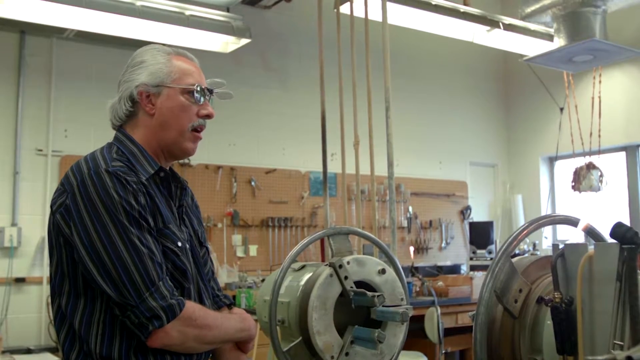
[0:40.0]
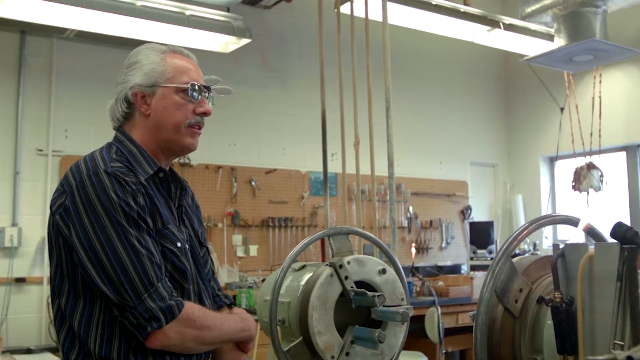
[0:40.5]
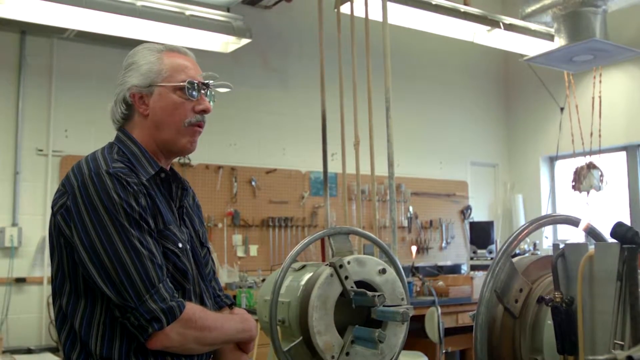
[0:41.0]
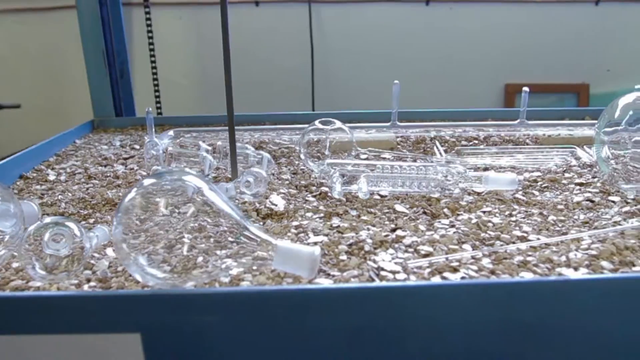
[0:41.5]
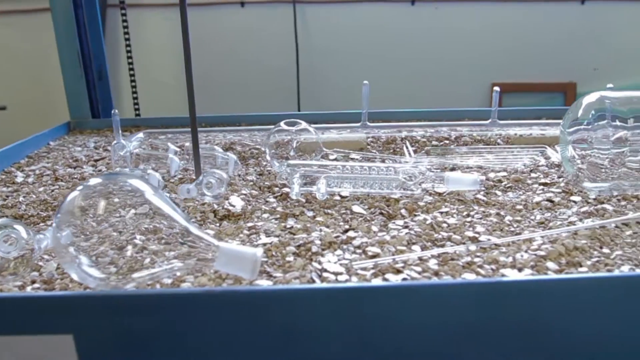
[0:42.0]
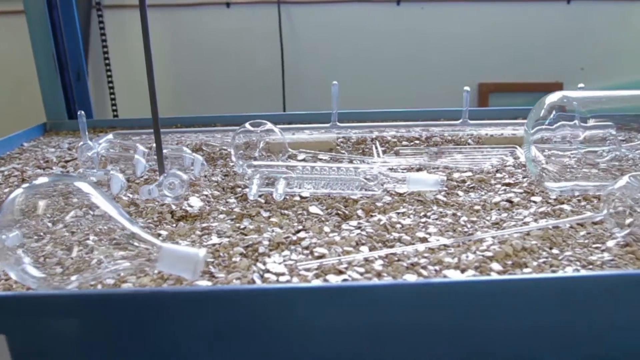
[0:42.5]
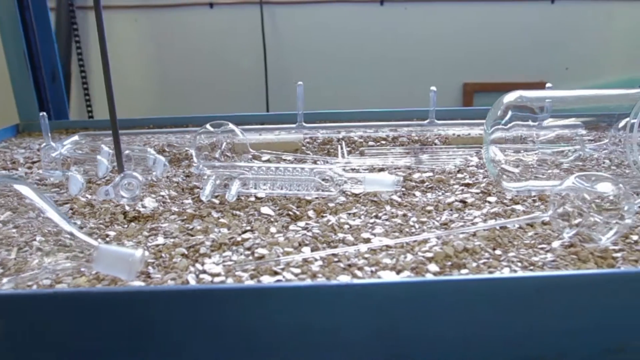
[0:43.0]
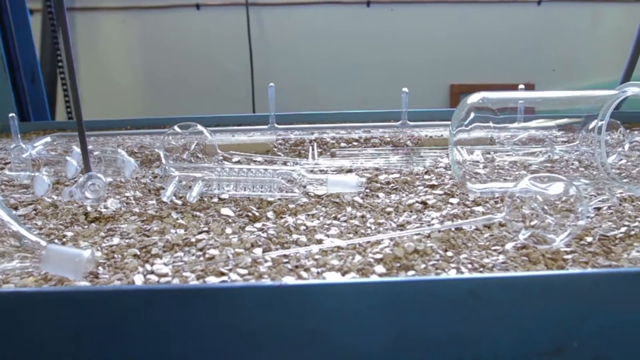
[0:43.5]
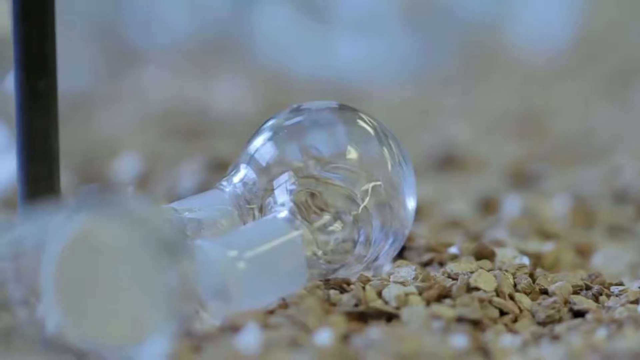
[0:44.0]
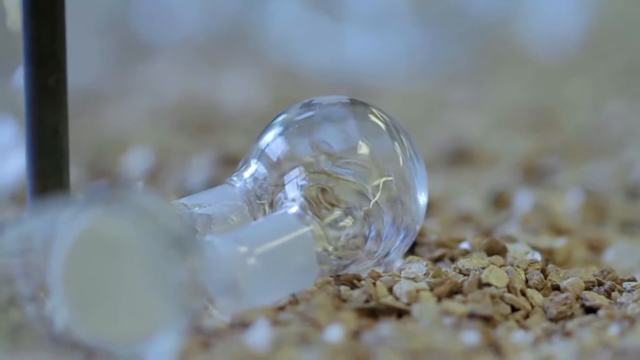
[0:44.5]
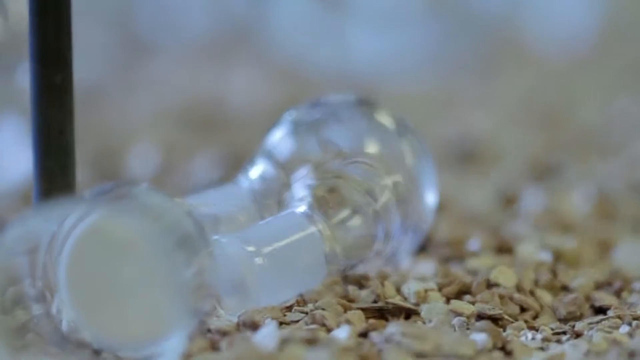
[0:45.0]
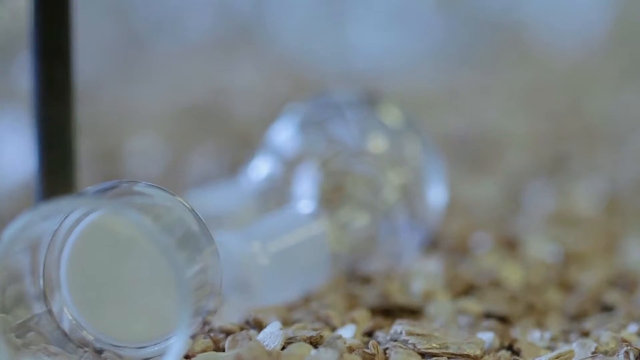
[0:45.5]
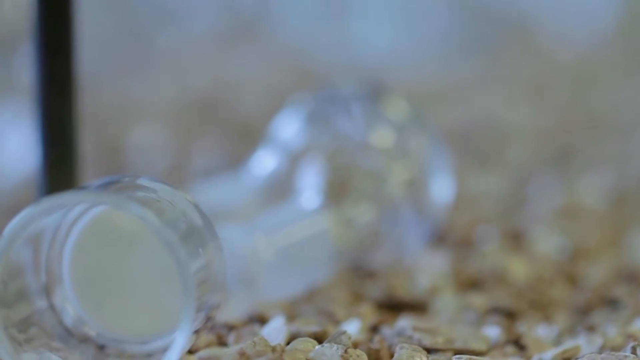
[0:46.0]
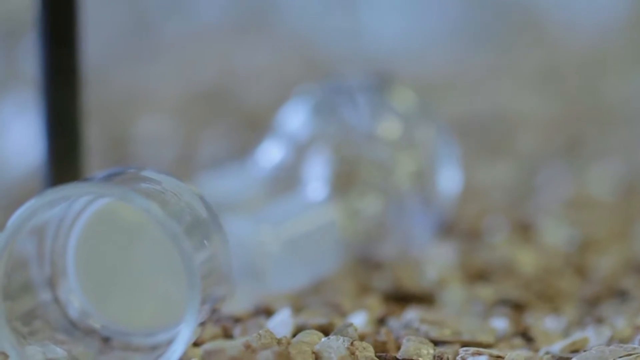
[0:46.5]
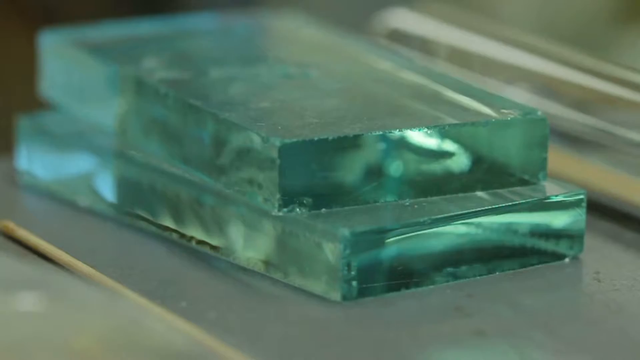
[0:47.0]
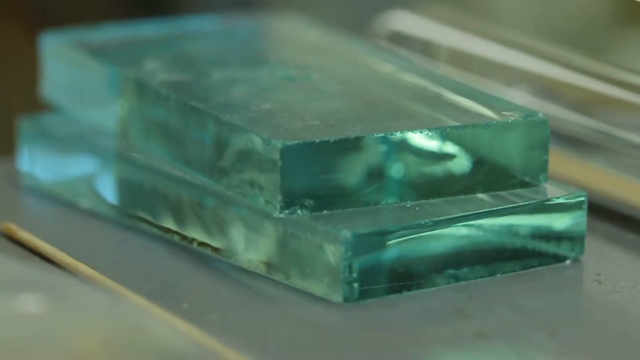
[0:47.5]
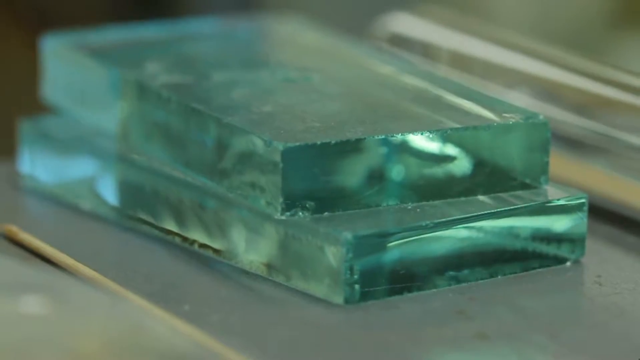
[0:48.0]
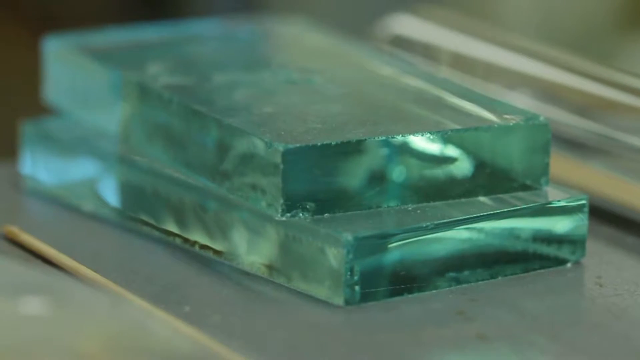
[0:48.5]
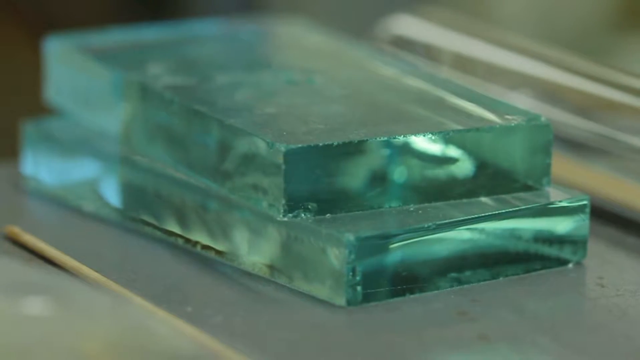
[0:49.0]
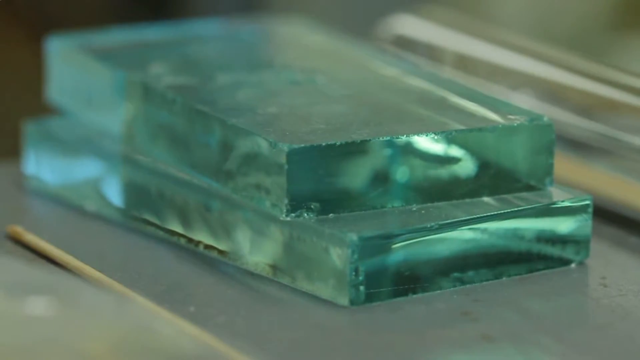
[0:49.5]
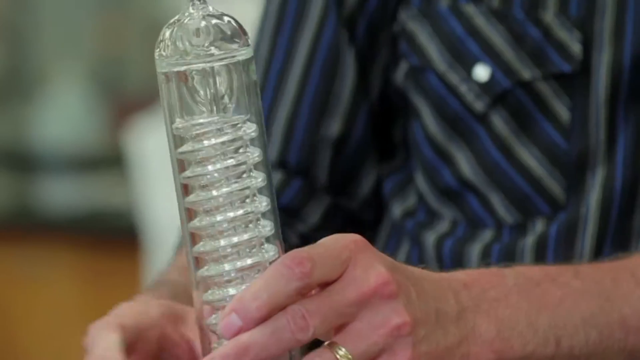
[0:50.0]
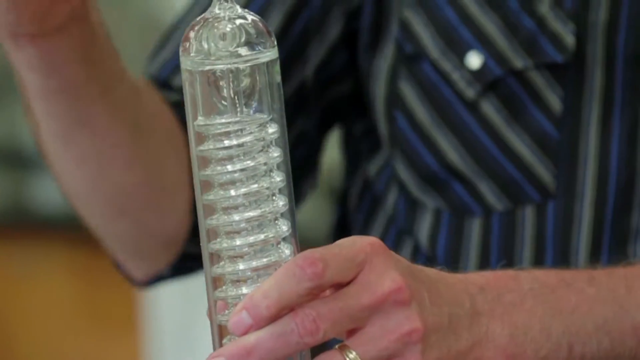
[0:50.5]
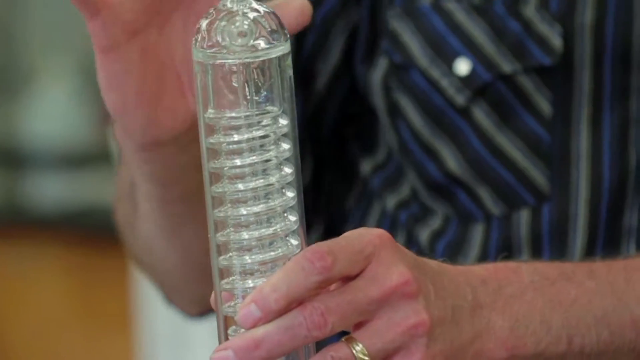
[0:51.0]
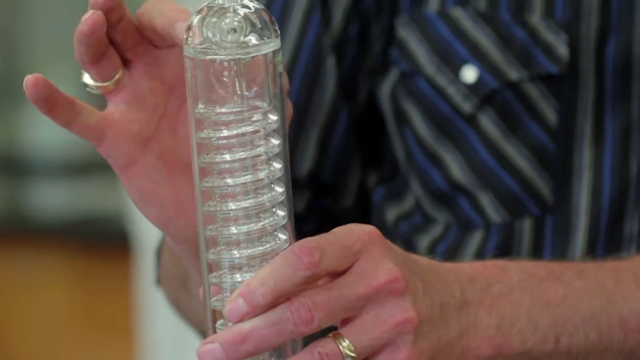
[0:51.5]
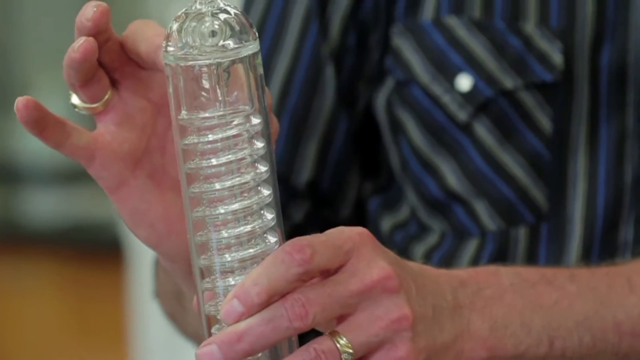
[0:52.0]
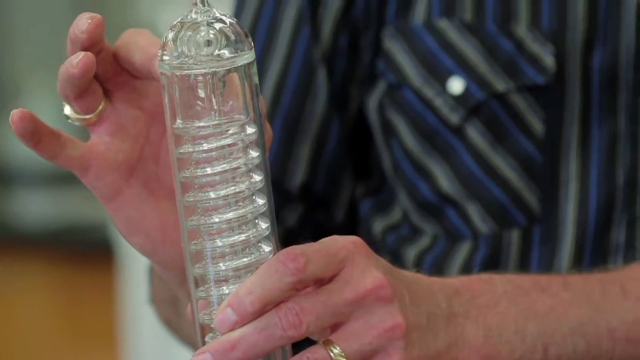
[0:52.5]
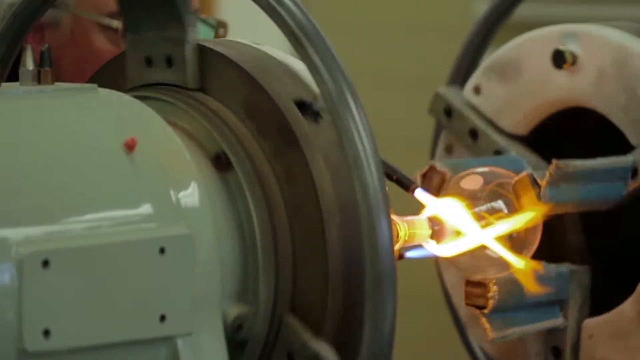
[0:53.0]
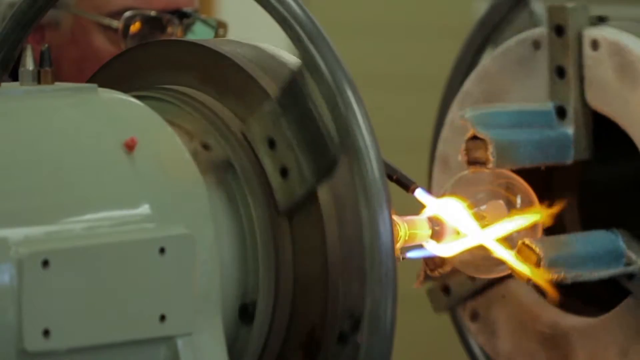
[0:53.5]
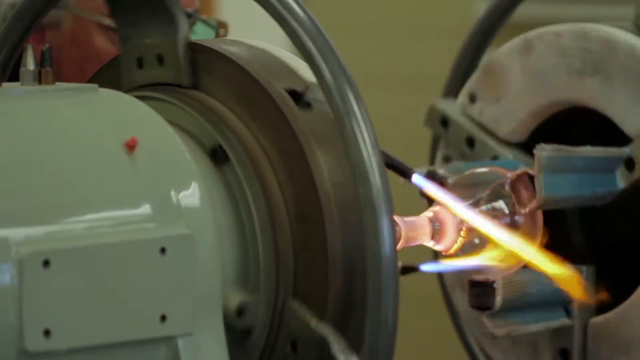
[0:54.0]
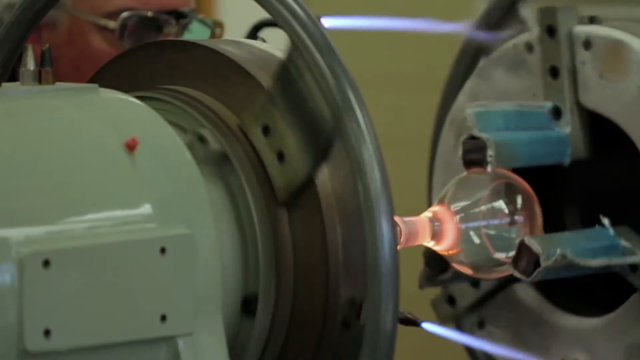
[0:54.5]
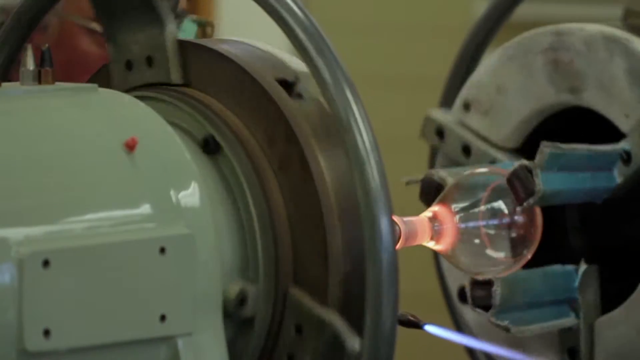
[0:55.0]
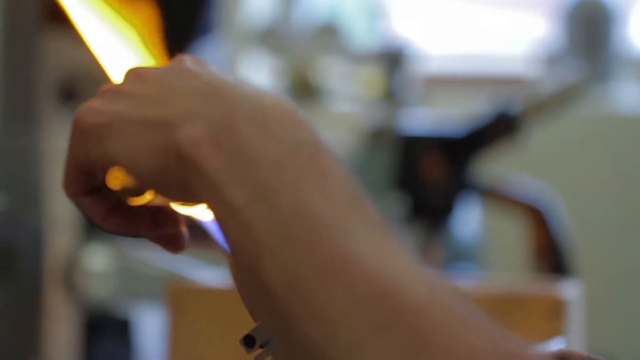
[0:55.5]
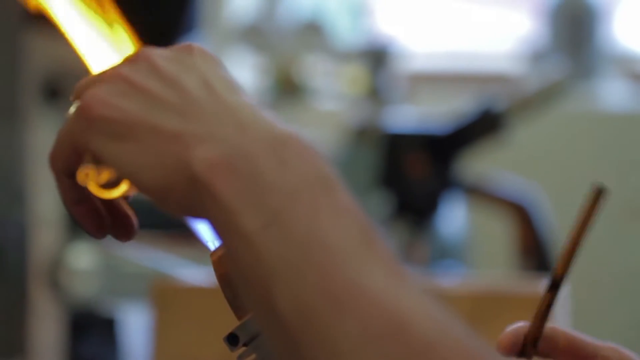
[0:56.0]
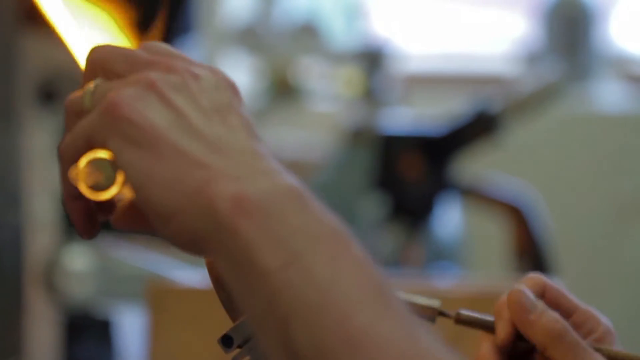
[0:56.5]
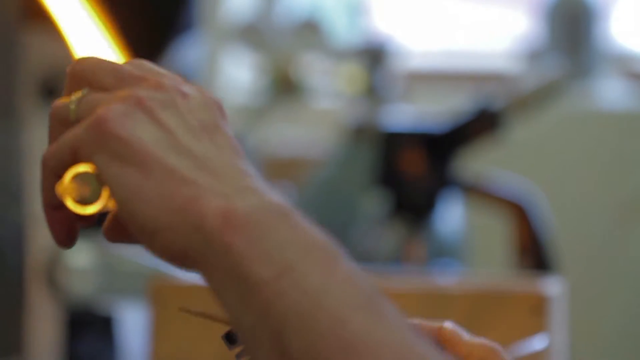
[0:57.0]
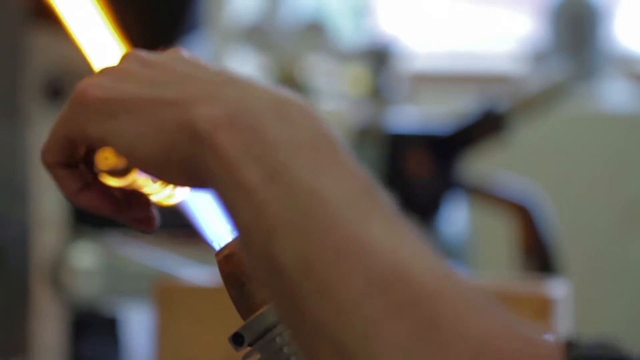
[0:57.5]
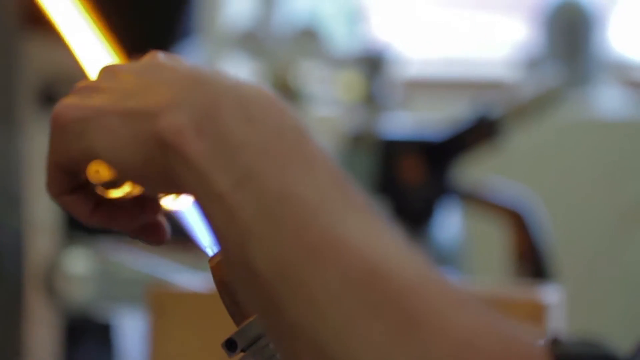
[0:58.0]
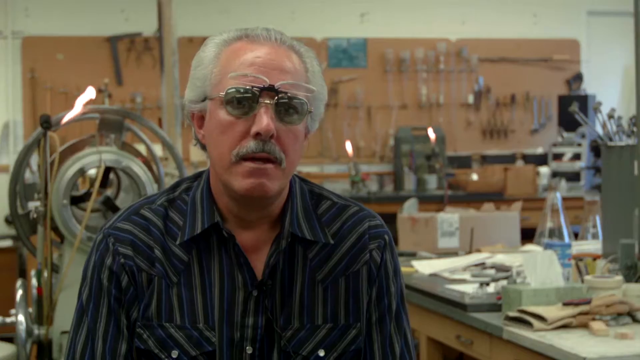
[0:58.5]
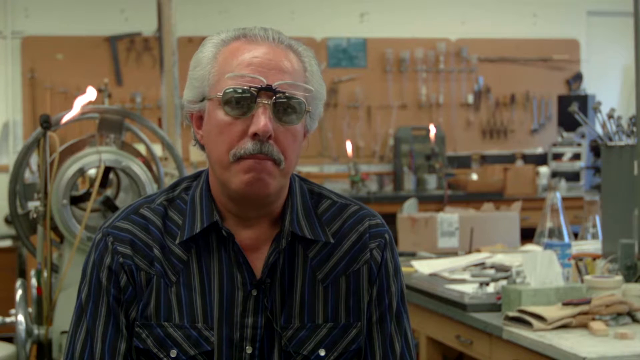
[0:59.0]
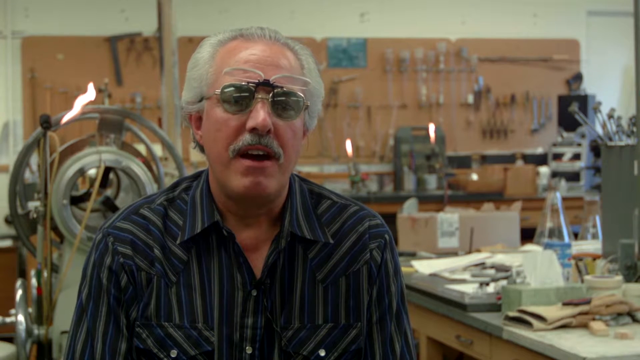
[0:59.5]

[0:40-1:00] He burns the glass into shape, as if creating some kind of bulb-like shape, and then talks again. A container holds glass pieces he has moulded; he seems to be moulding beakers and other tools. A glass is shown up front, then another glass he moulded, which looks like it has a spring-like item inside it.